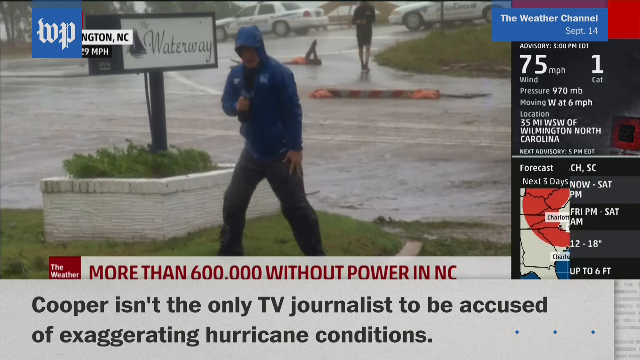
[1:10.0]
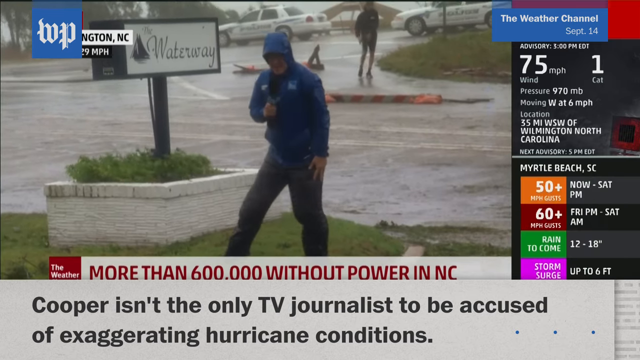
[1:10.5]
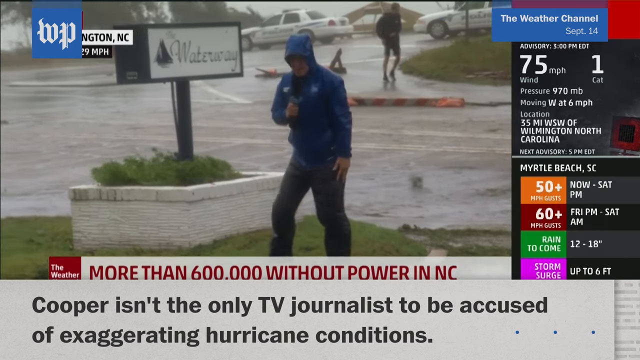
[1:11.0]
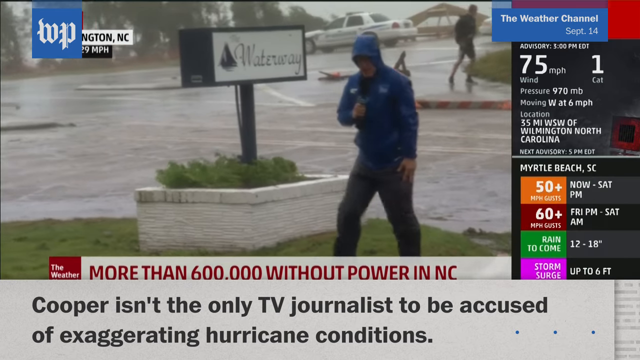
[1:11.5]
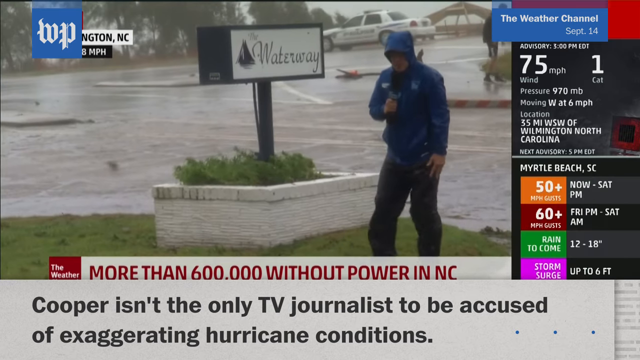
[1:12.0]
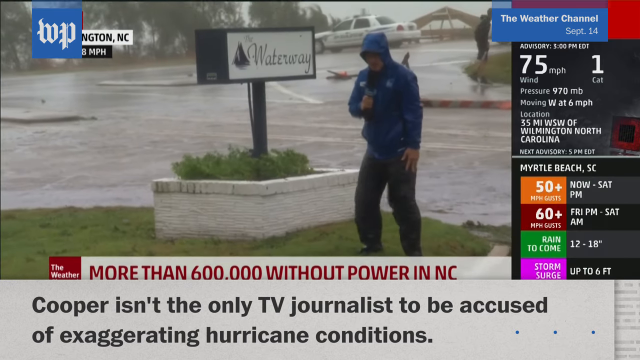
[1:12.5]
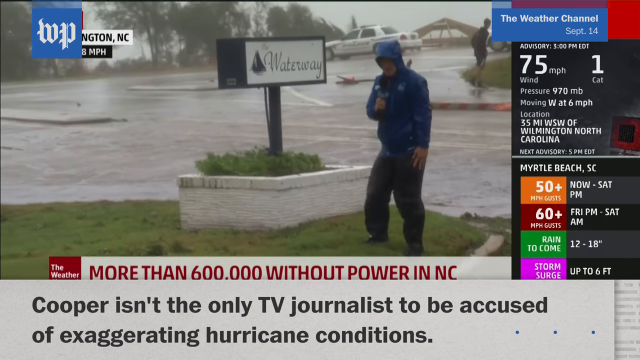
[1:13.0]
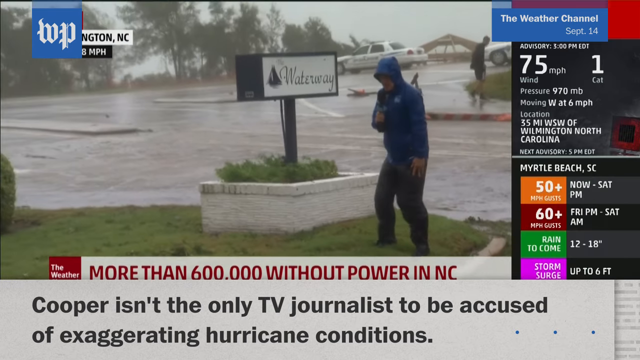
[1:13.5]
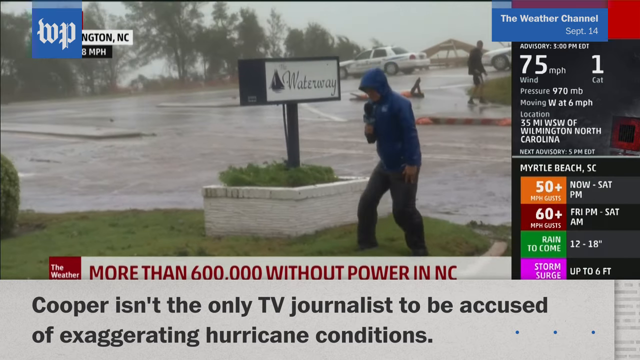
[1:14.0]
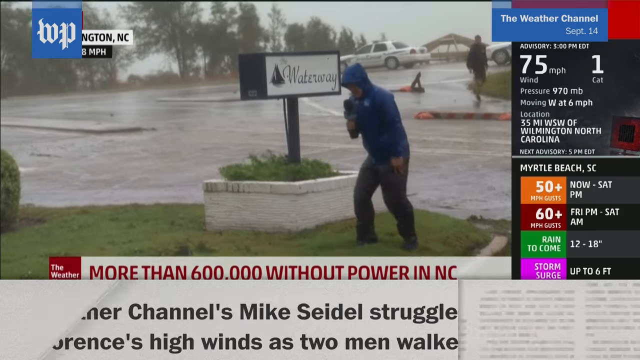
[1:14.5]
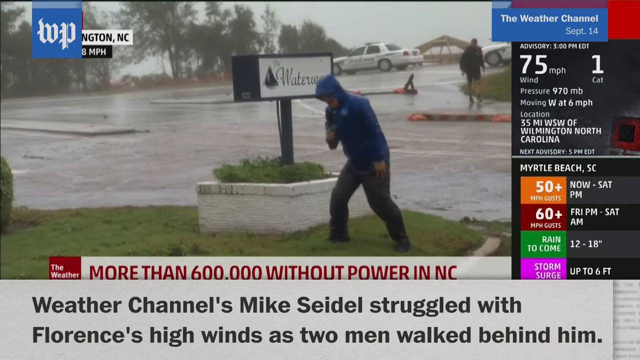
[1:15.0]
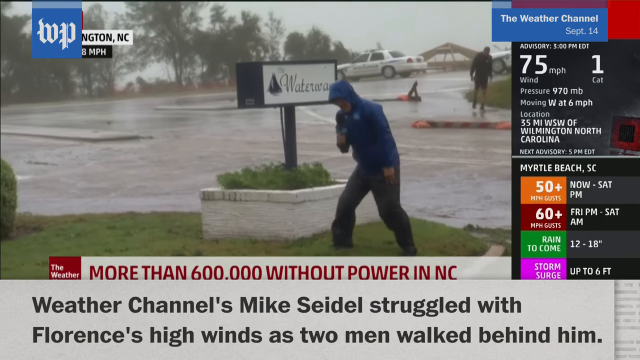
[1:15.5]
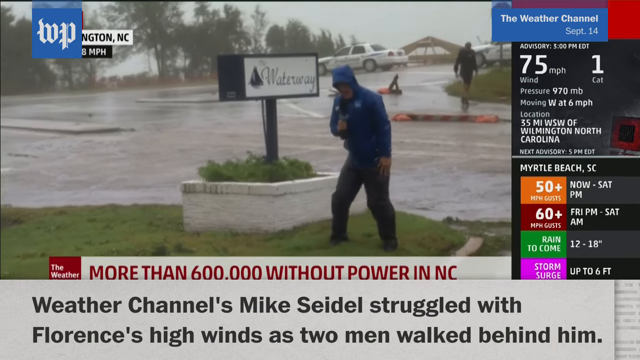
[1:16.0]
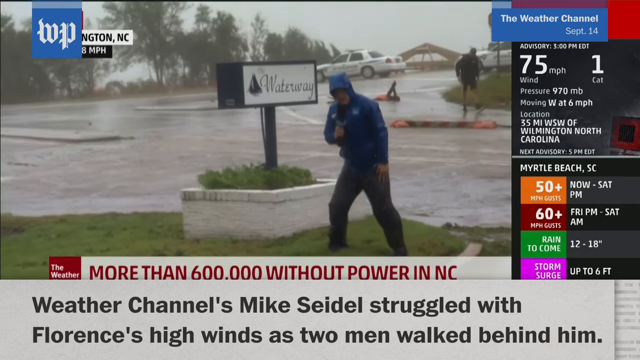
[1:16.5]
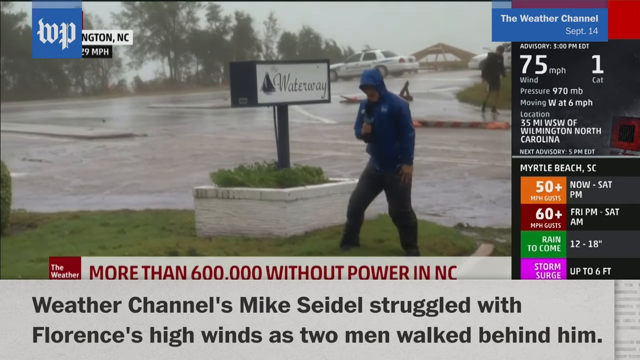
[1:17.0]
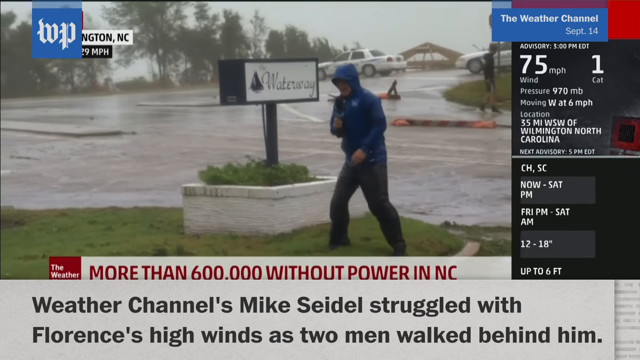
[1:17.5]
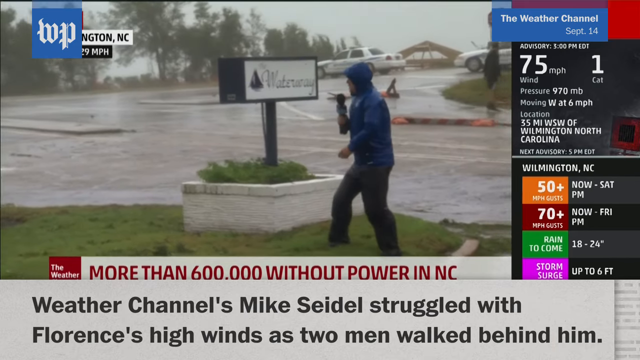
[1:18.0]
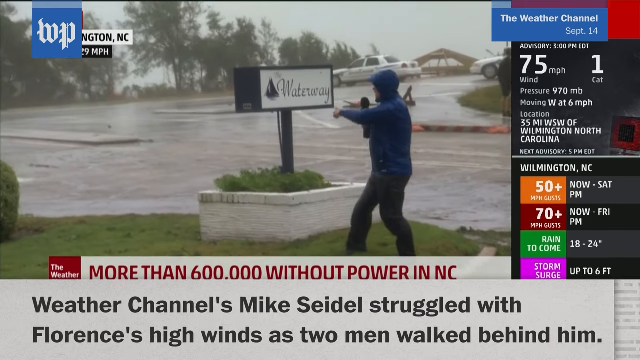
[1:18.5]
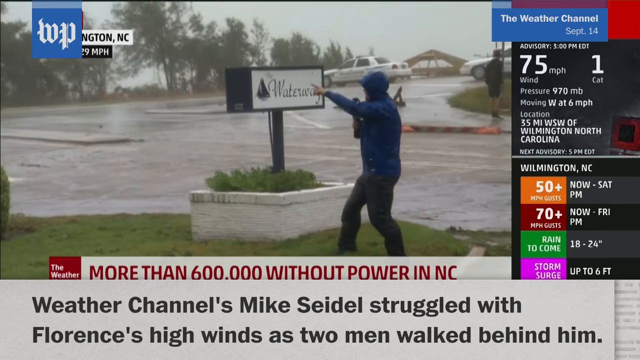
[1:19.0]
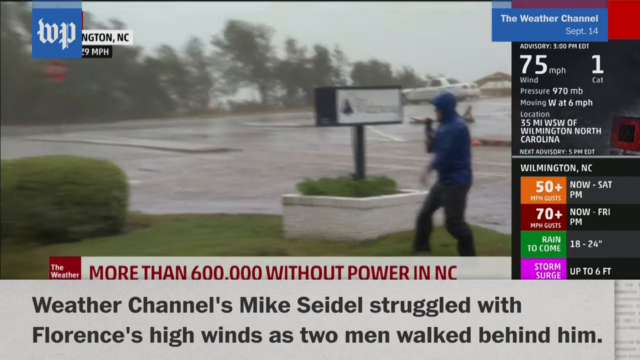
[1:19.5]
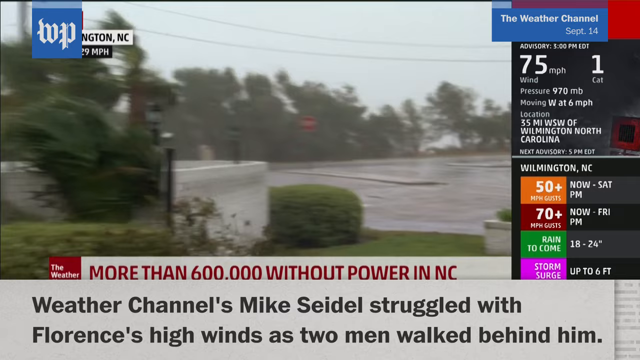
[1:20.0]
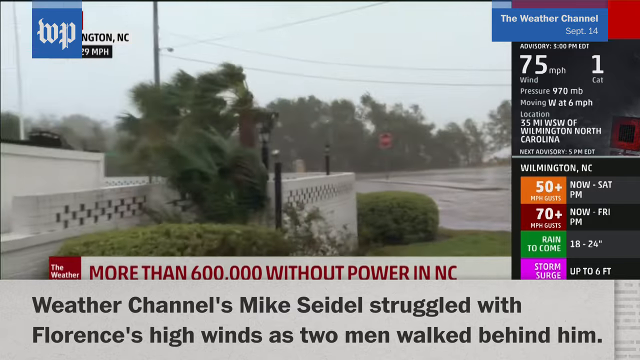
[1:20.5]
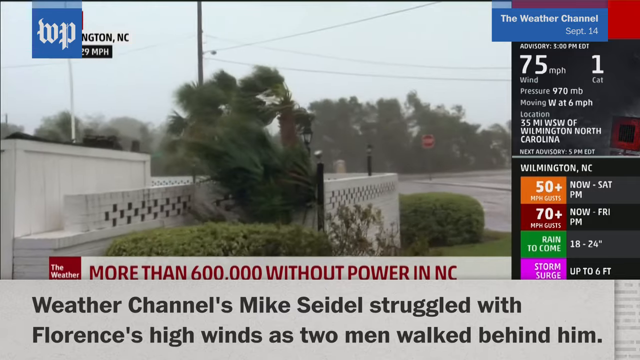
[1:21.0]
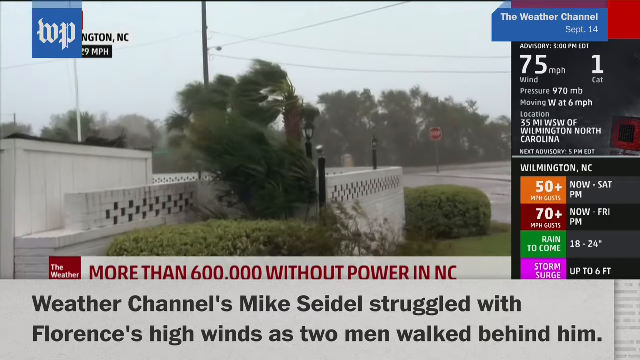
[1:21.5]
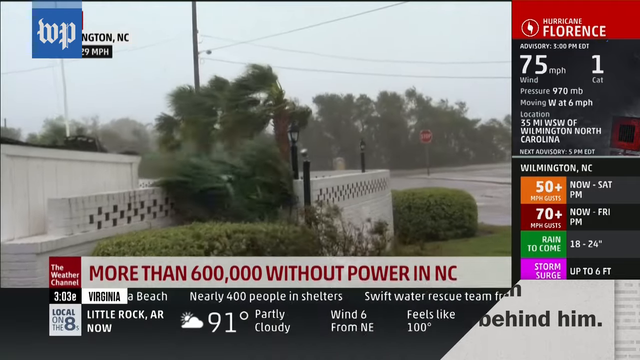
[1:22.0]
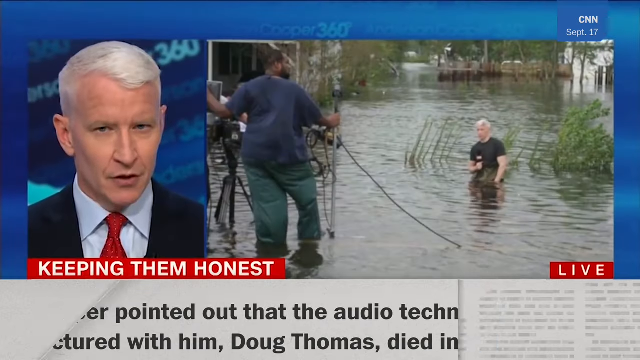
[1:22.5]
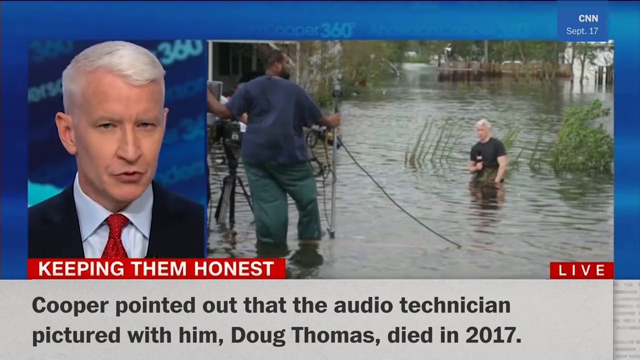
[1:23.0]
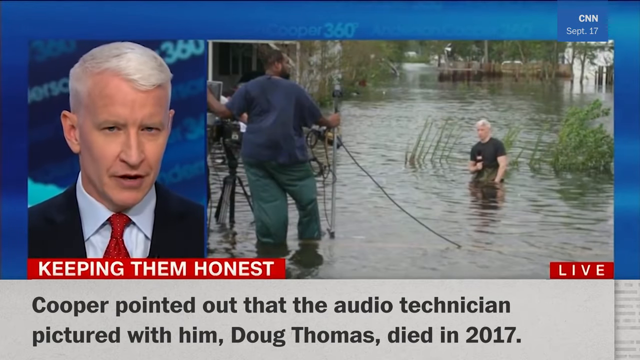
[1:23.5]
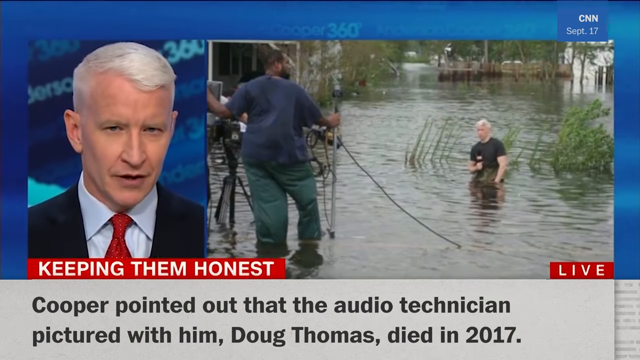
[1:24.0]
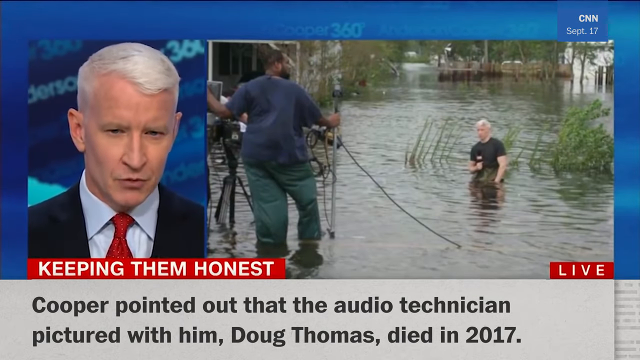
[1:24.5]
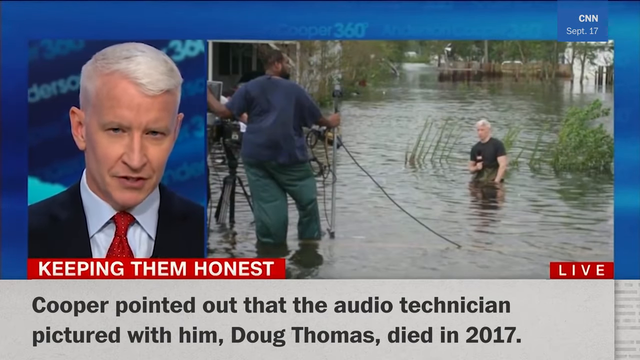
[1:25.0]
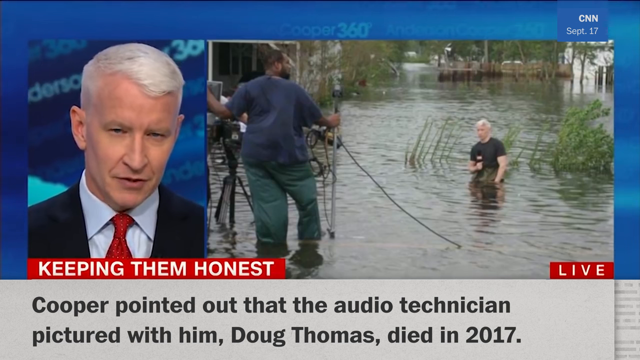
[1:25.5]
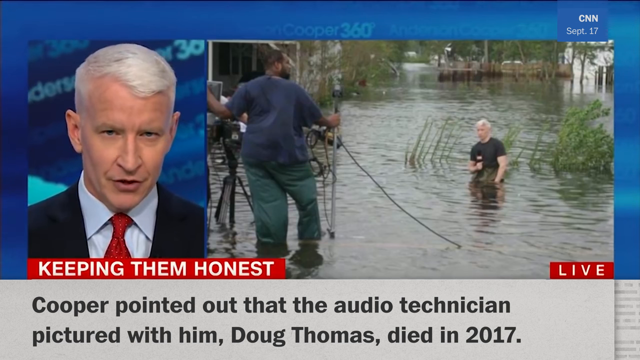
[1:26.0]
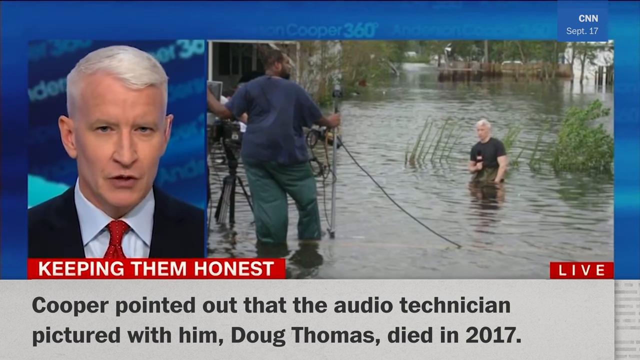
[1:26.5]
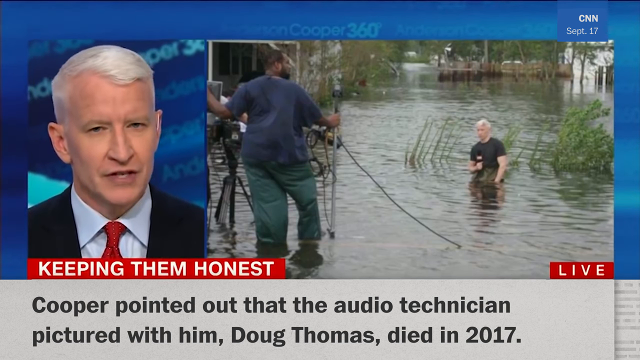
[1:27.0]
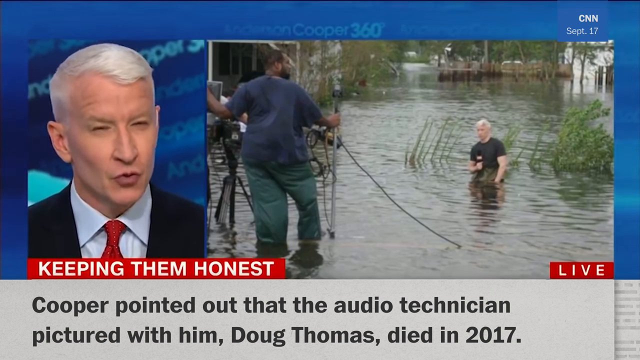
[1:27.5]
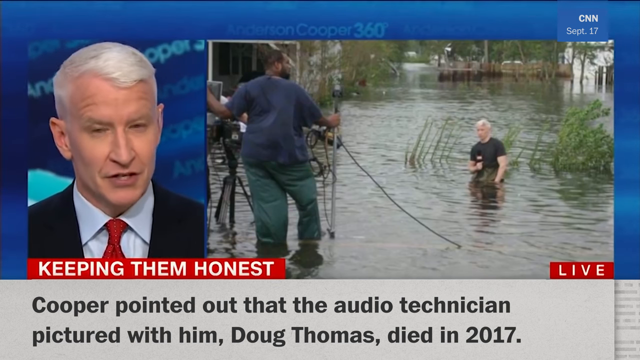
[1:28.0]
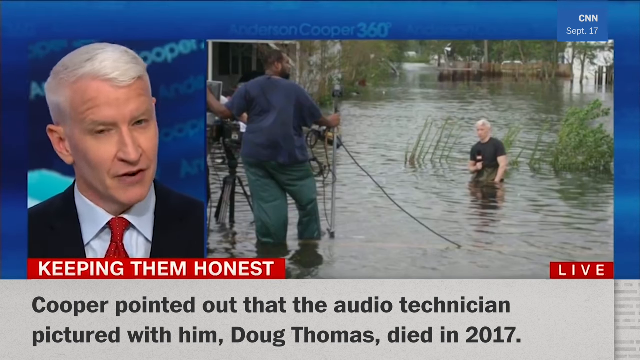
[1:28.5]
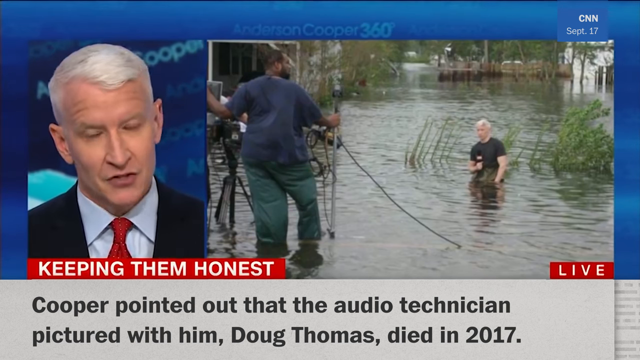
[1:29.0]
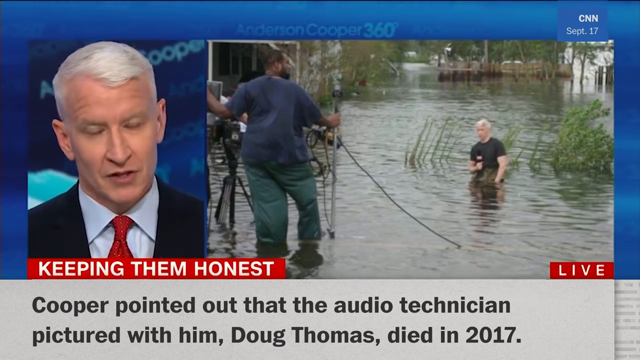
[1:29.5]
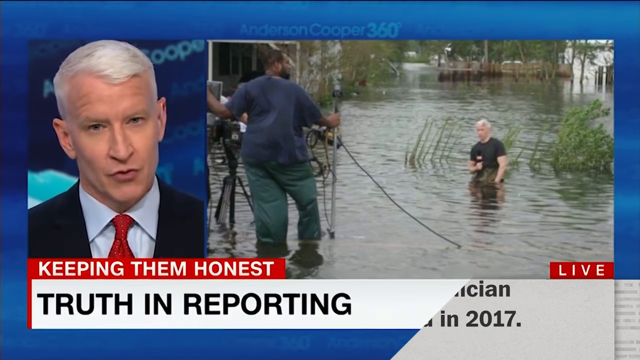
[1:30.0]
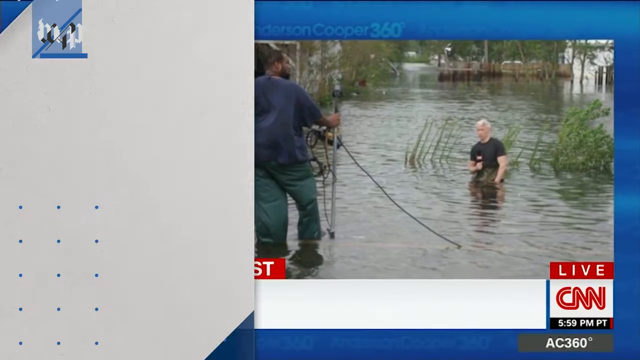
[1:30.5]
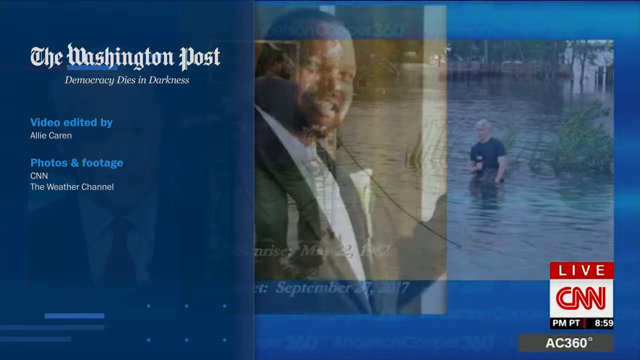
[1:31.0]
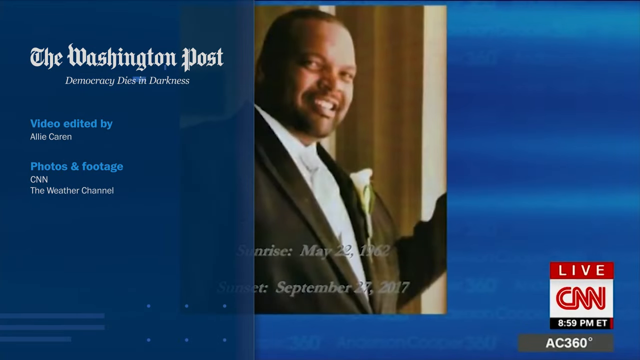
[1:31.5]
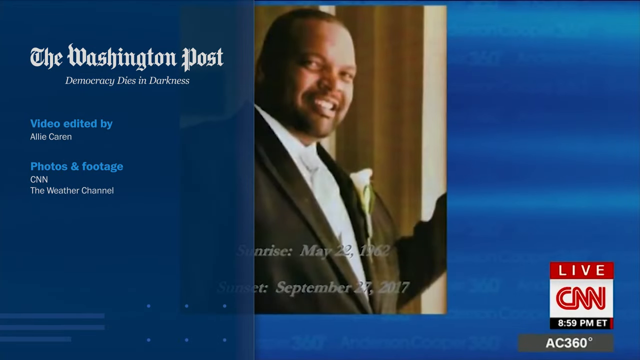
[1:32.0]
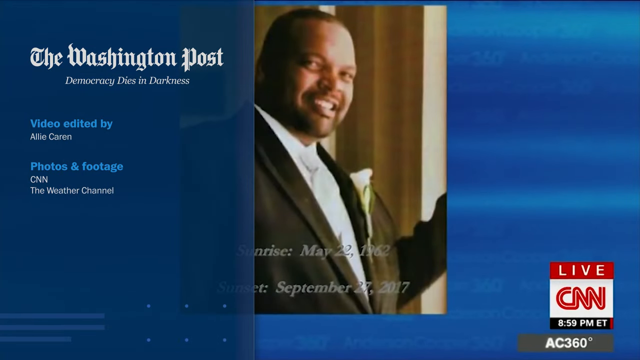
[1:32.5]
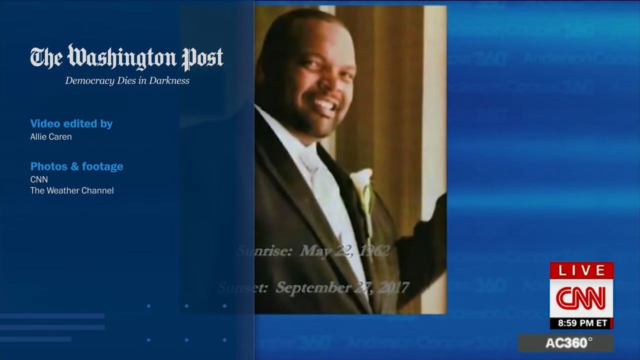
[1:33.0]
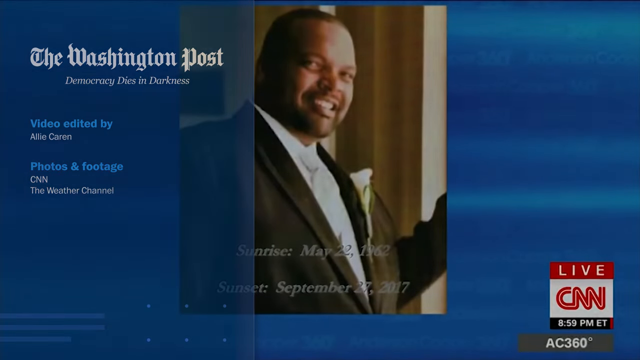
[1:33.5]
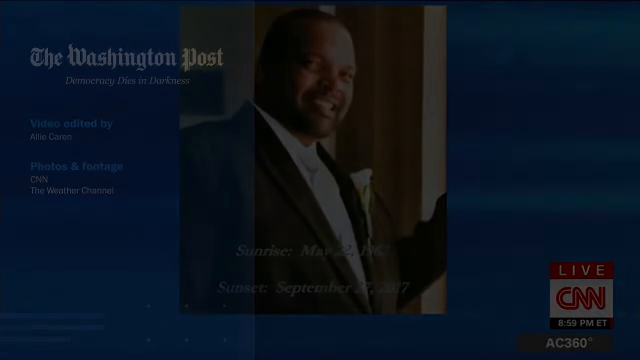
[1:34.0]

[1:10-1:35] The video transitions to a different screen showing a sort of news anchor in a CNN display with text that includes "more than 600,000." The CNN screen shows Anderson Cooper and a different individual, with text reading "Cooper isn't the only TV journalist to be accused." The video then shows Cooper in the water, and then transitions to a blue screen with a Black individual in the background, a Washington Post screen, and a live CNN feed.